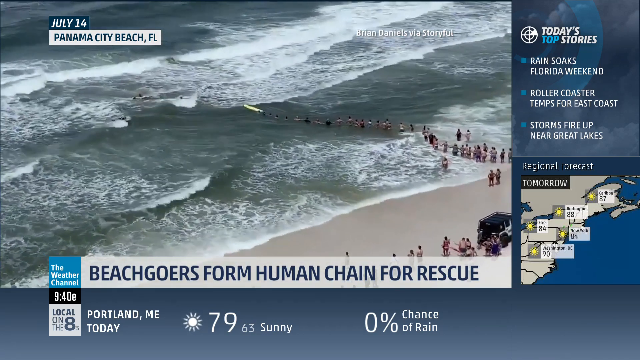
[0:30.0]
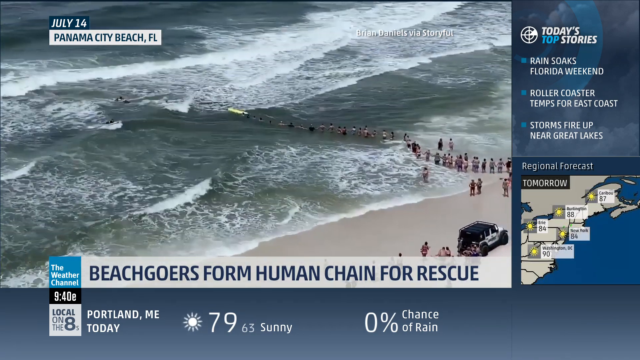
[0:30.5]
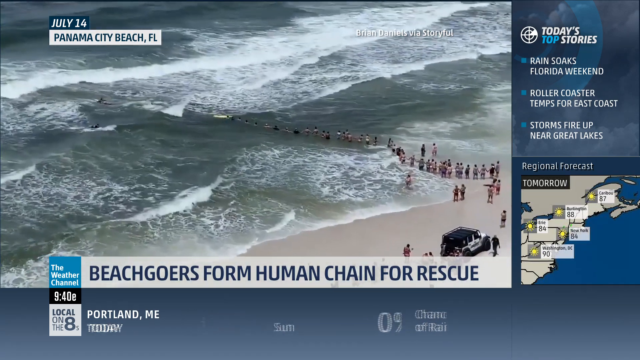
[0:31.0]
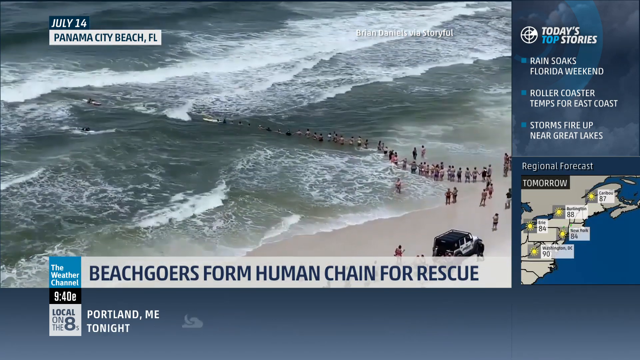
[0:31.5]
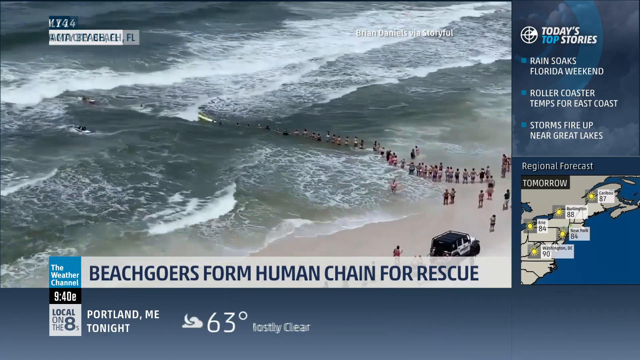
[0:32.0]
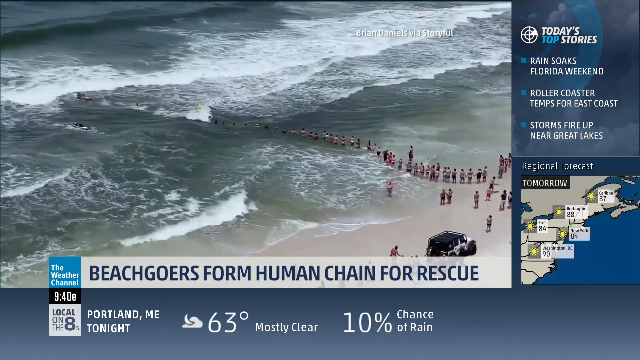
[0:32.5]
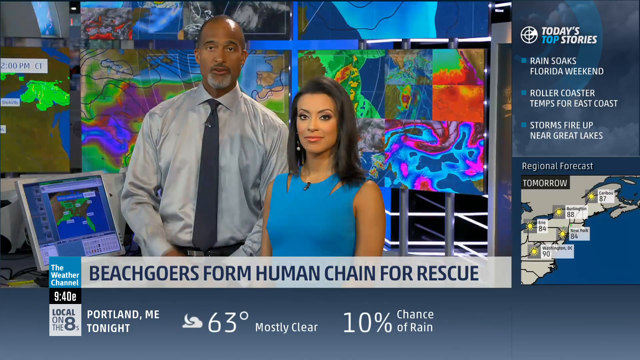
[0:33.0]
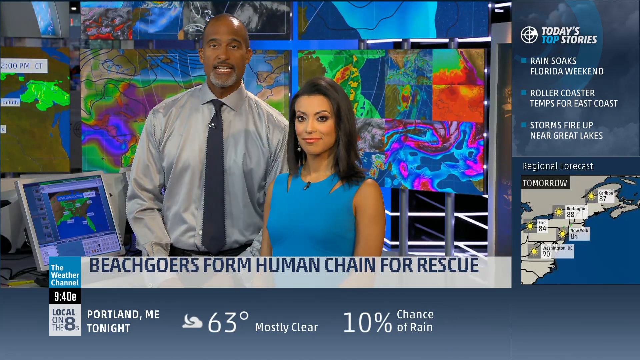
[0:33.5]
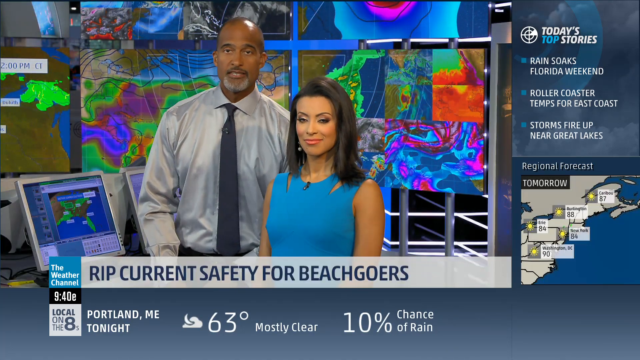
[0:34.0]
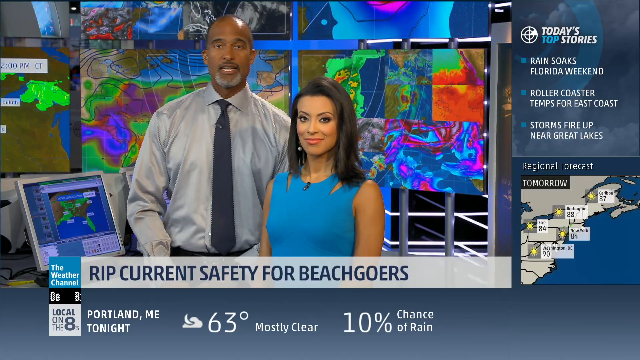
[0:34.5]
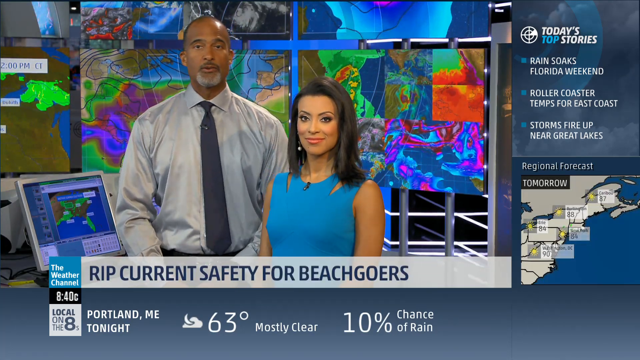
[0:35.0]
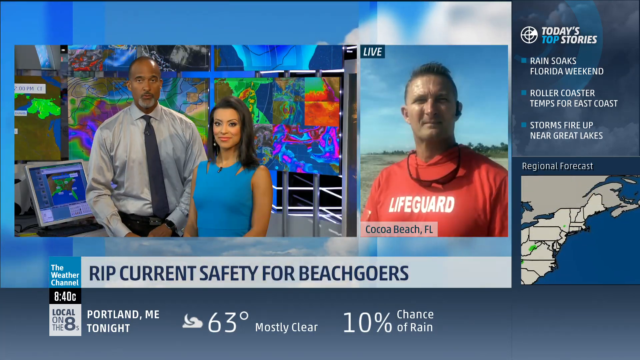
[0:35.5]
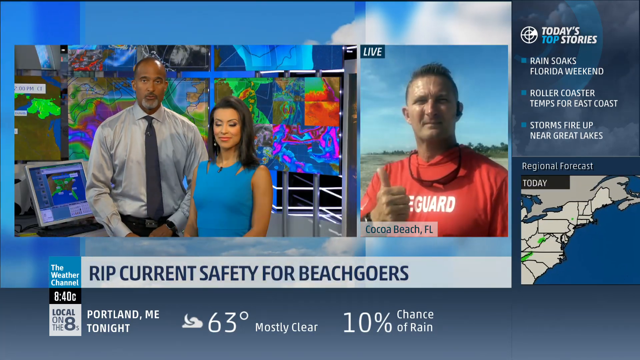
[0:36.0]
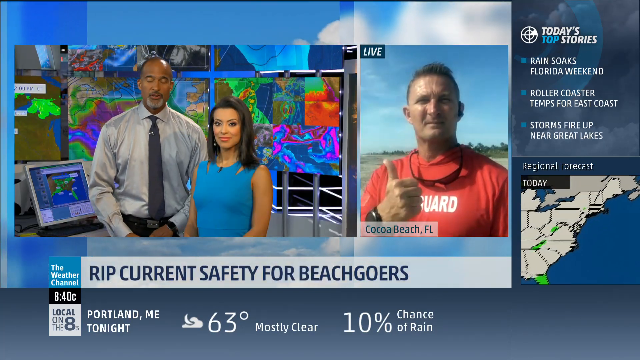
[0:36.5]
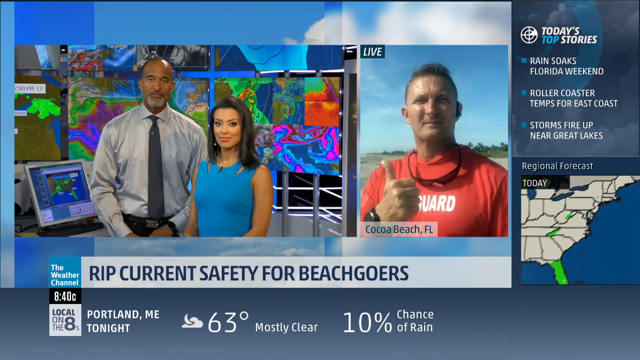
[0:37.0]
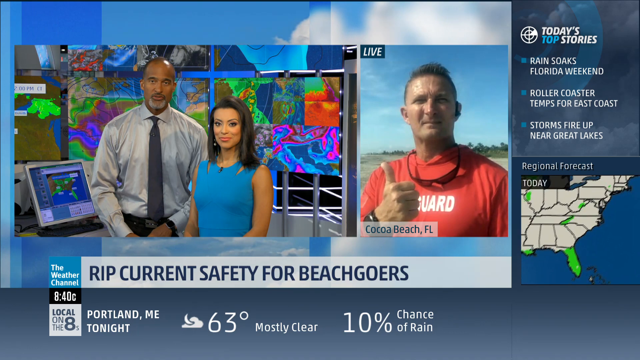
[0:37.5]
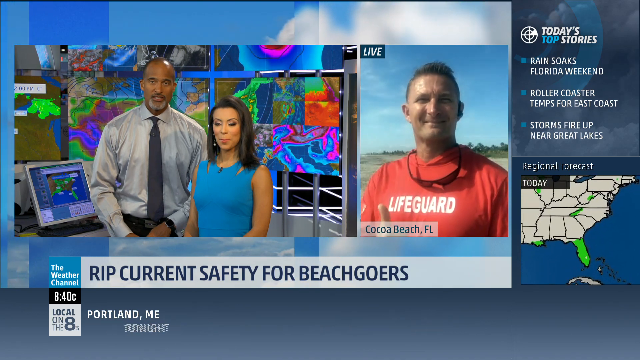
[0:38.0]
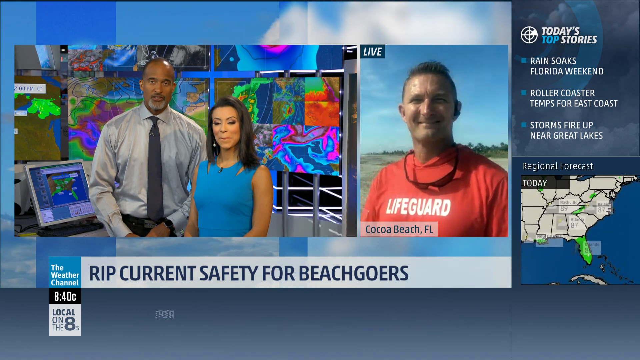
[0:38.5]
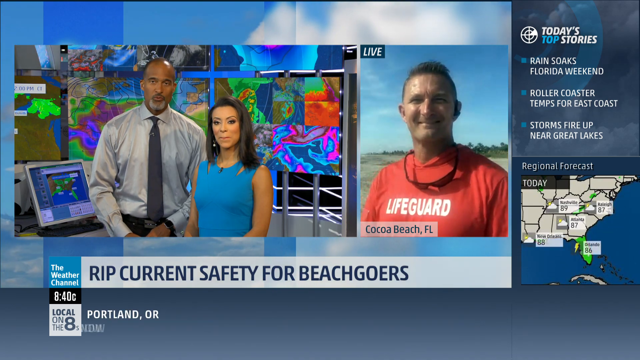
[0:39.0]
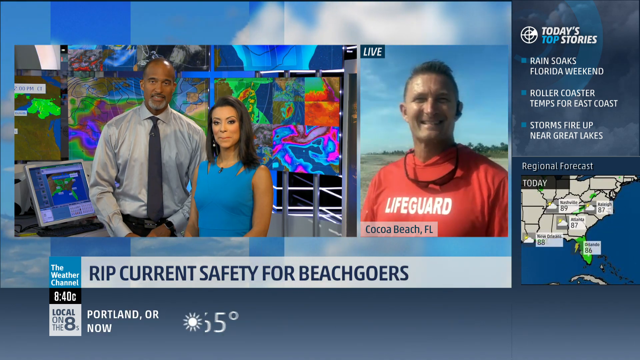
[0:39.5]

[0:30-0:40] In the Weather Channel piece "Beachgoers form human chain for rescue," what appears to be an estimated 50 or so people make a chain into the water as very strong waves come crashing in. Then the two newscasters, a man and a woman, stand in front of screens showing weather patterns and weather simulations. They appear to be interviewing a lifeguard on location at Cocoa Beach, Florida, who gives a thumbs-up, possibly indicating that the rescue was successful. At the bottom the text reads "rip current safety for beachgoers," suggesting the people were apparently caught in a rip current and pulled to safety.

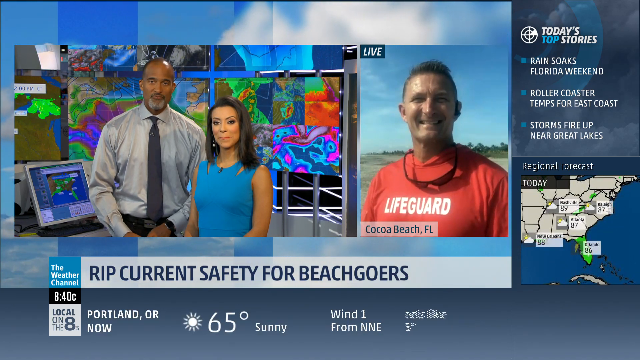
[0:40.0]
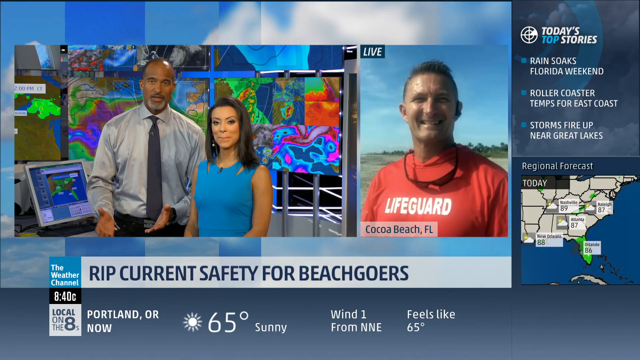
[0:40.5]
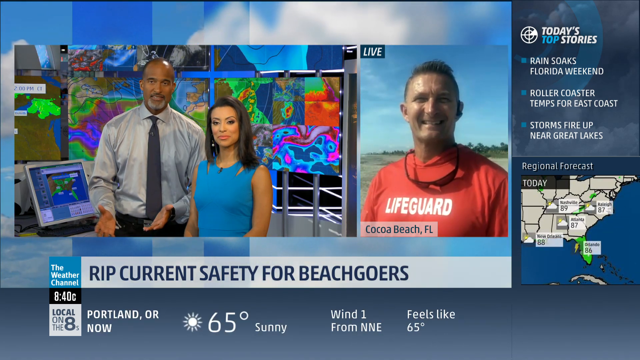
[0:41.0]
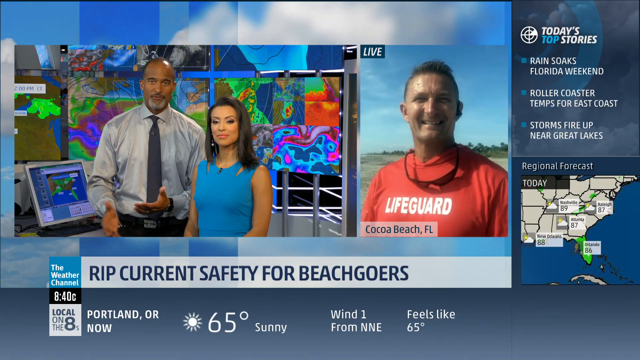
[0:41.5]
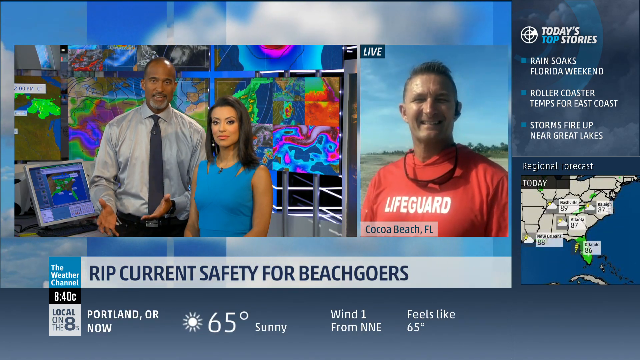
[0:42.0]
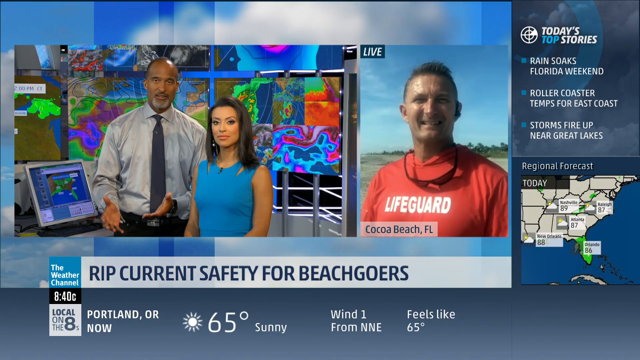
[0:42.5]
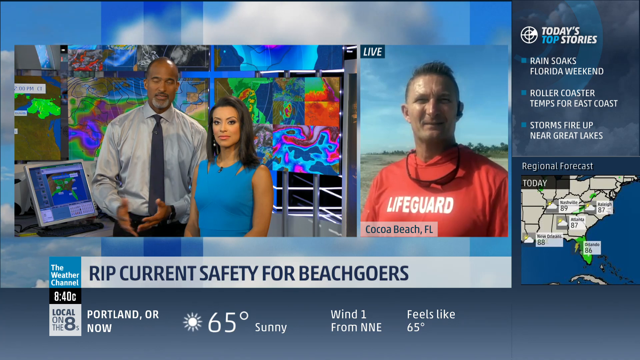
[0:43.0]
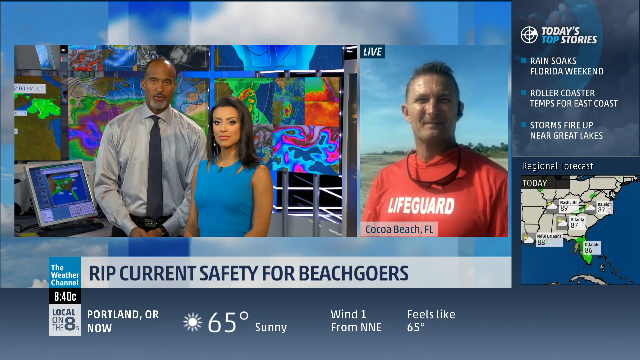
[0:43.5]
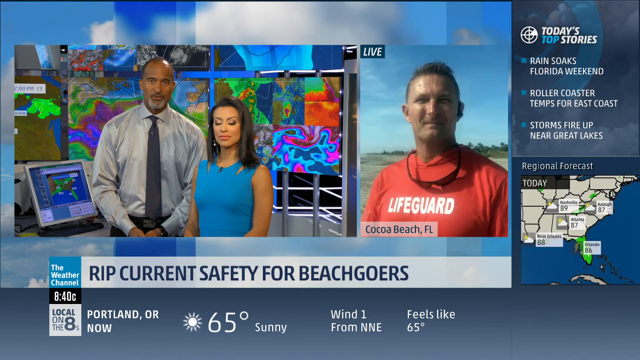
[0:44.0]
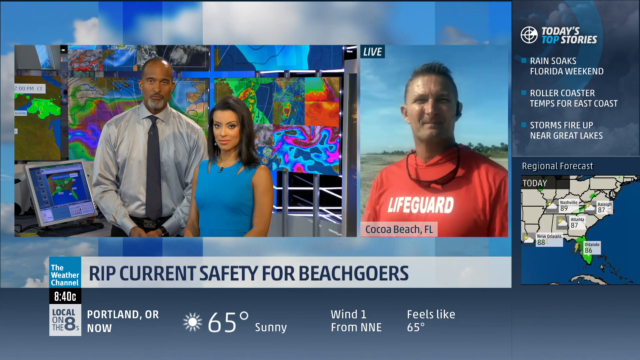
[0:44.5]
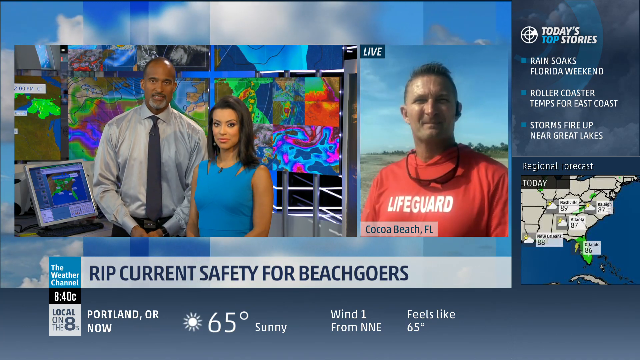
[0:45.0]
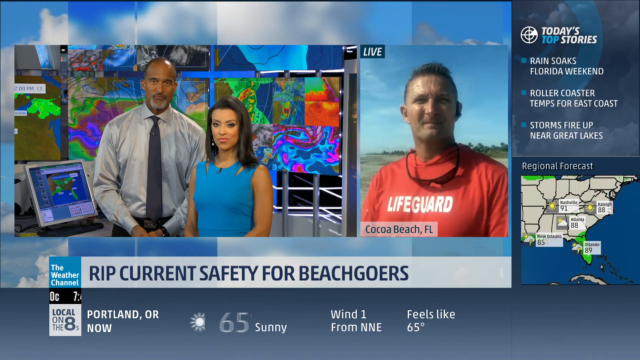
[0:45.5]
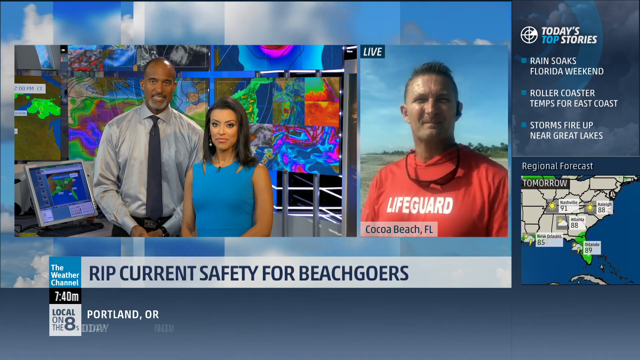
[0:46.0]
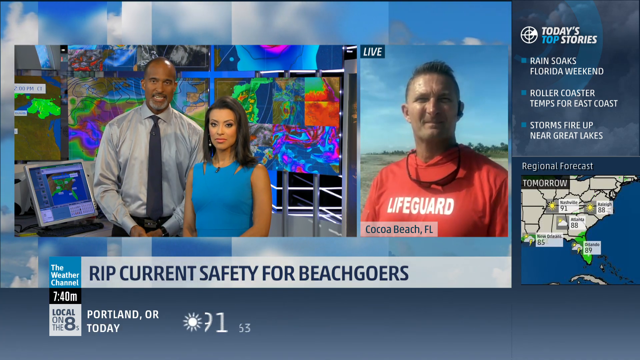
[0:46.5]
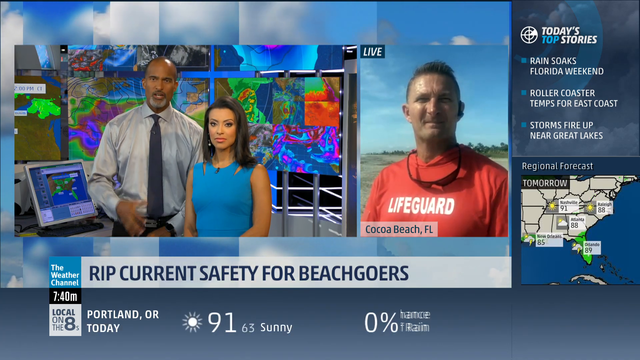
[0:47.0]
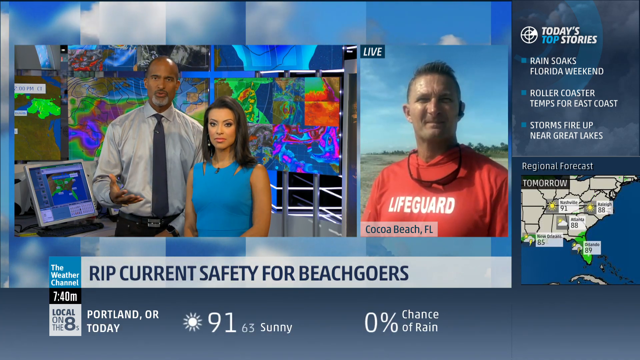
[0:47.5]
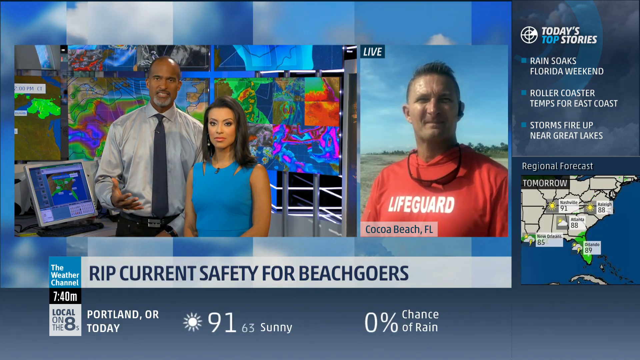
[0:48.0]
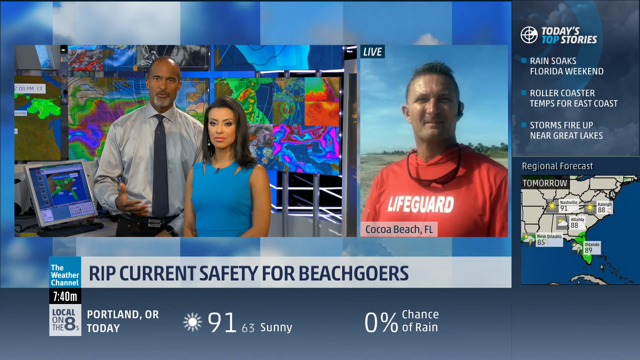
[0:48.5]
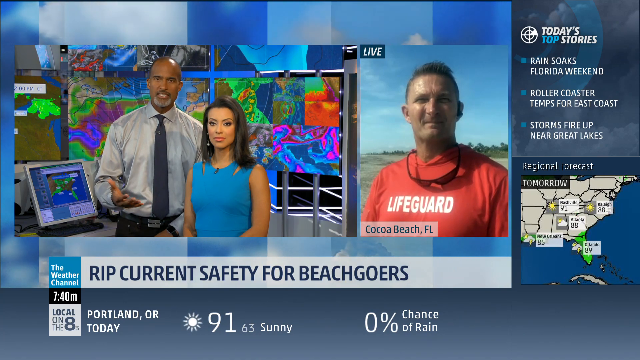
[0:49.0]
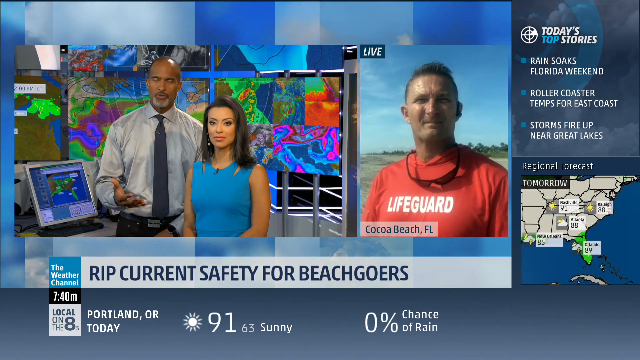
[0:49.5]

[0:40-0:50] Two newscasters in the studio stand in front of weather screens with simulations showing weather patterns. They are interviewing a lifeguard on location at Cocoa Beach, Florida, who smiles and nods. The text at the bottom reads "rip current safety for beachgoers." On the right side of the screen a regional forecast lists Nashville, Raleigh, Atlanta, New Orleans, and Orlando, and above it the text reads "today's top stories": "Rain soaks Florida weekend," "Roller coaster temps for East Coast," and "Storms fire up near Great Lakes."